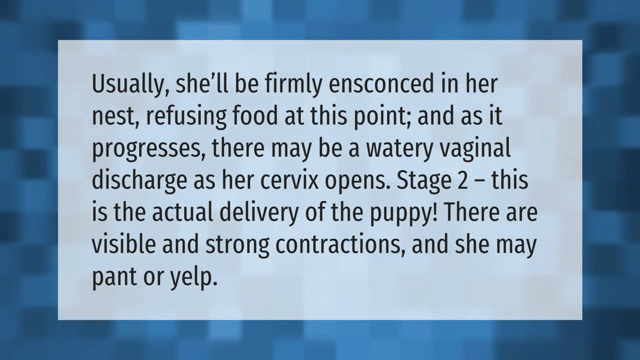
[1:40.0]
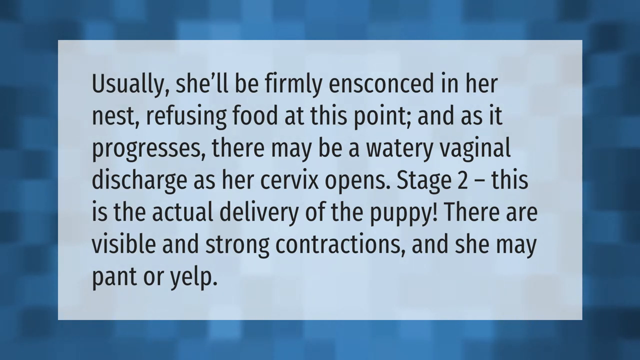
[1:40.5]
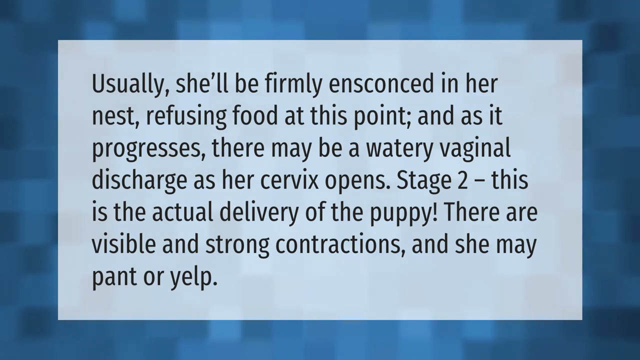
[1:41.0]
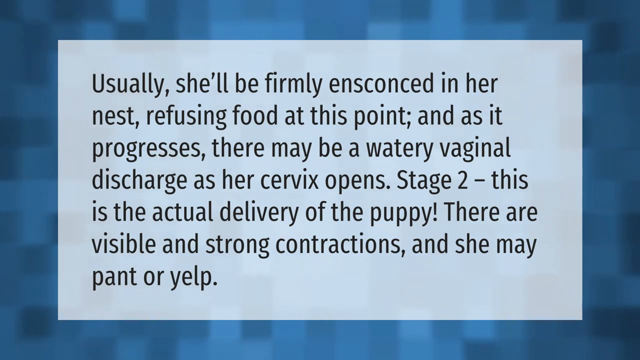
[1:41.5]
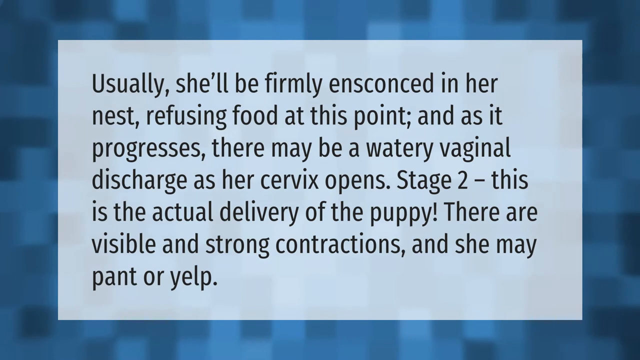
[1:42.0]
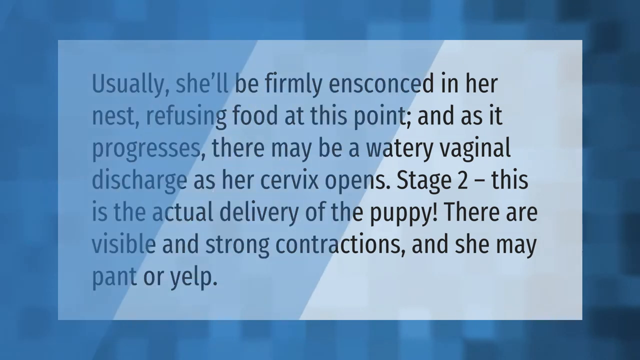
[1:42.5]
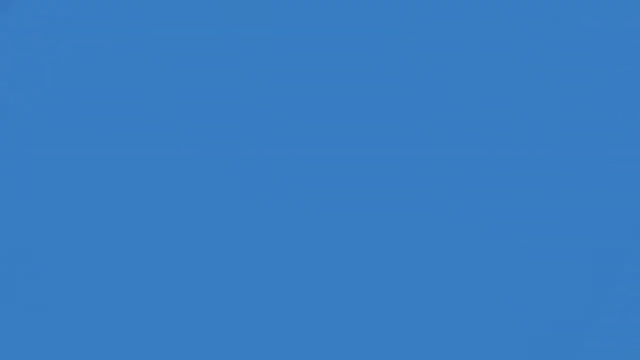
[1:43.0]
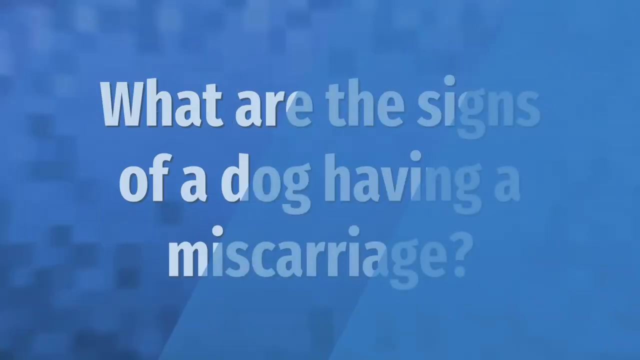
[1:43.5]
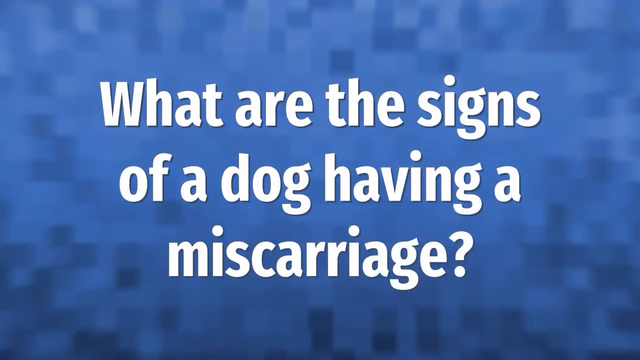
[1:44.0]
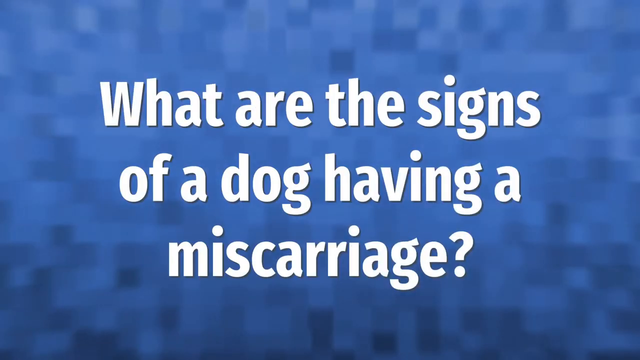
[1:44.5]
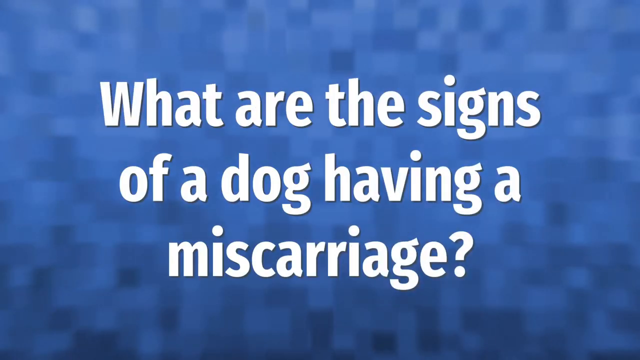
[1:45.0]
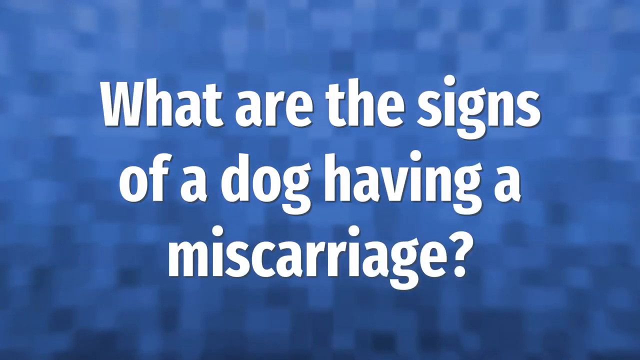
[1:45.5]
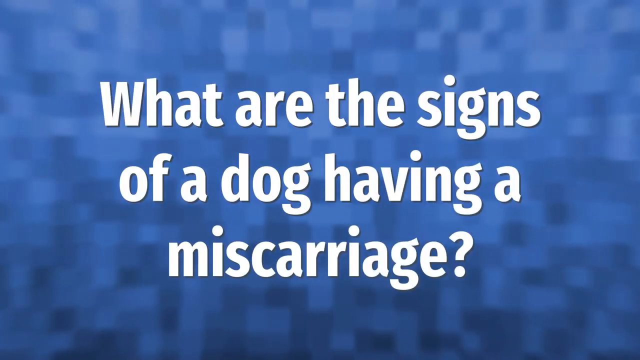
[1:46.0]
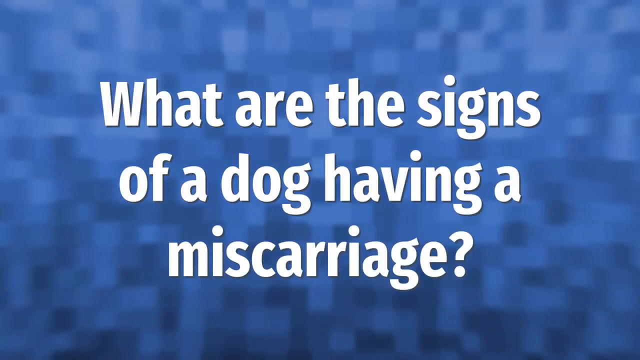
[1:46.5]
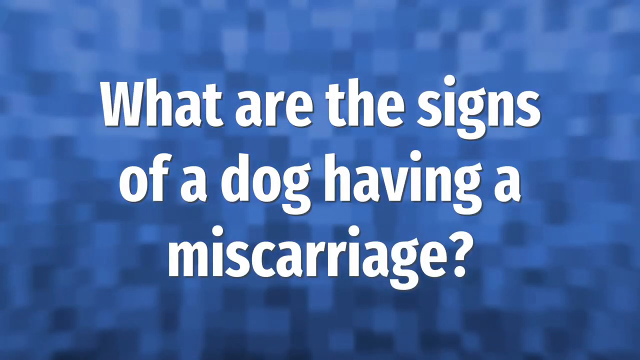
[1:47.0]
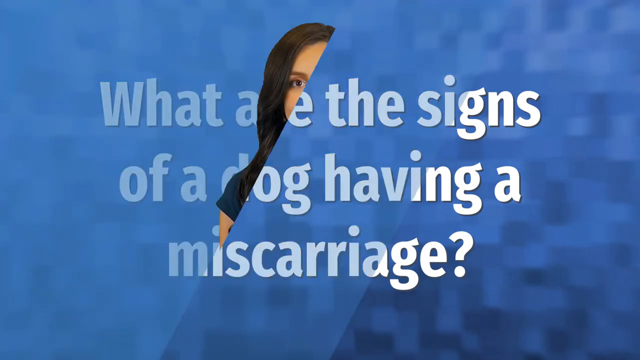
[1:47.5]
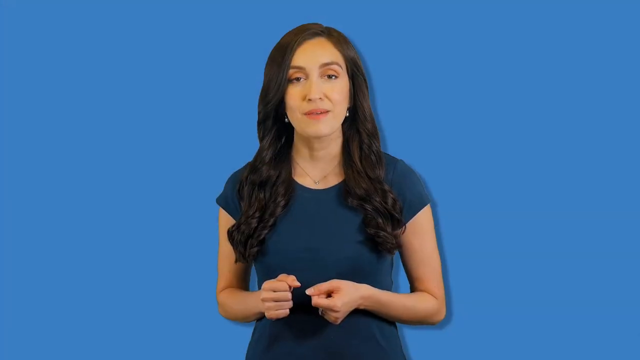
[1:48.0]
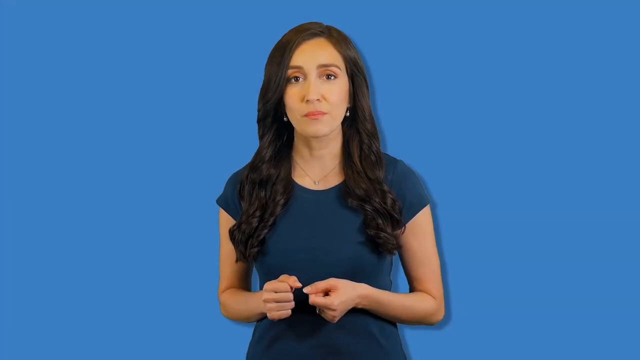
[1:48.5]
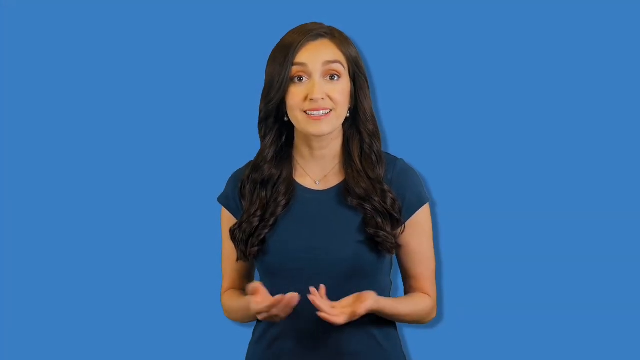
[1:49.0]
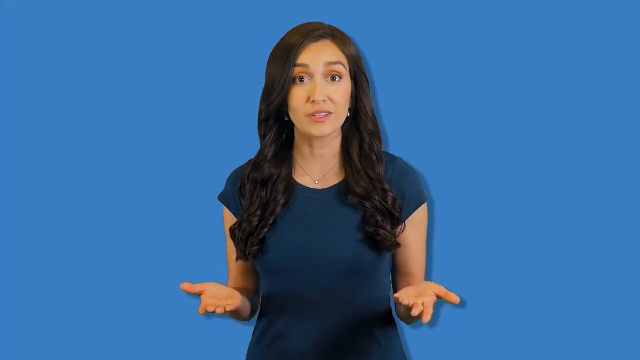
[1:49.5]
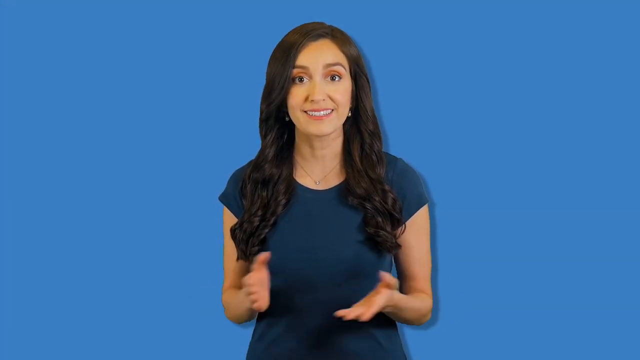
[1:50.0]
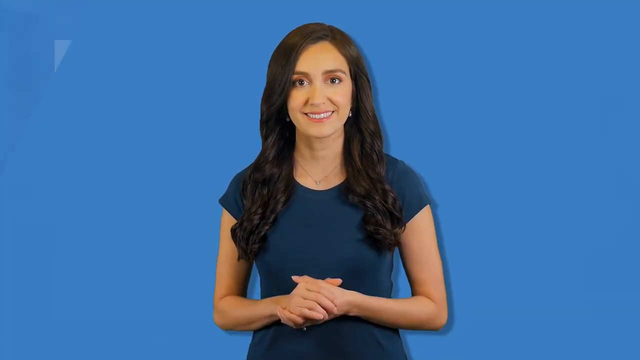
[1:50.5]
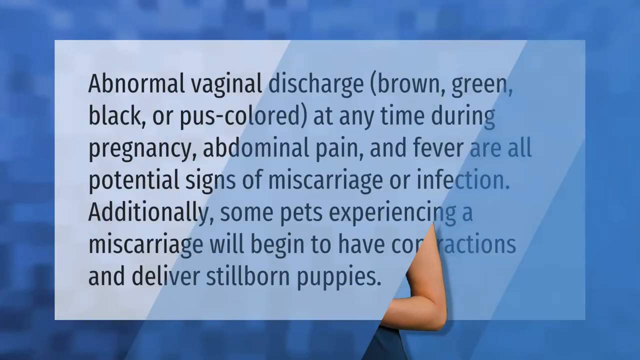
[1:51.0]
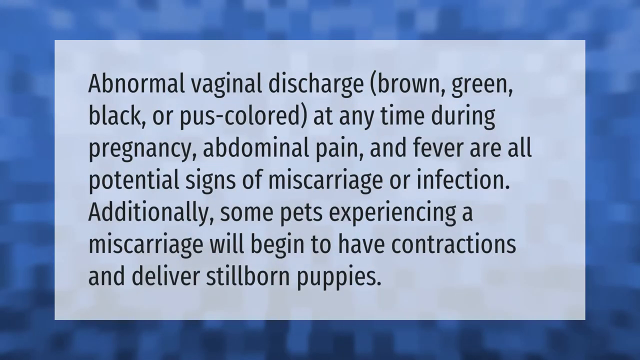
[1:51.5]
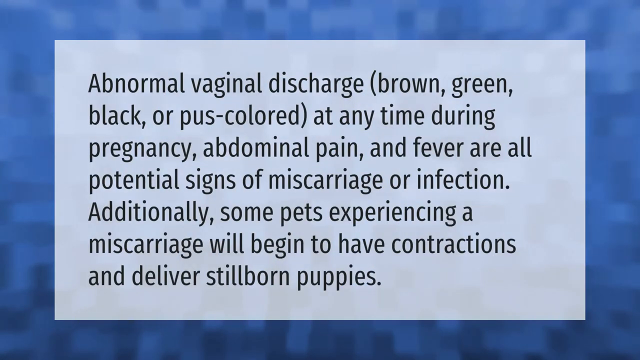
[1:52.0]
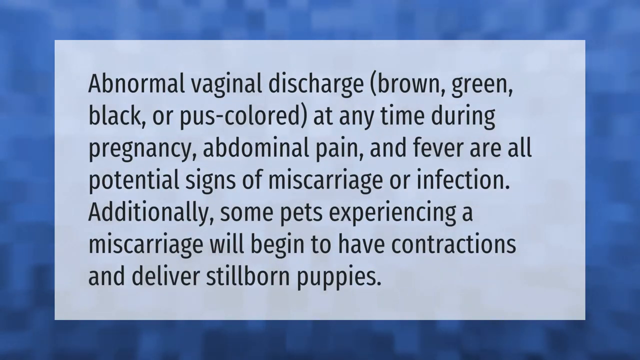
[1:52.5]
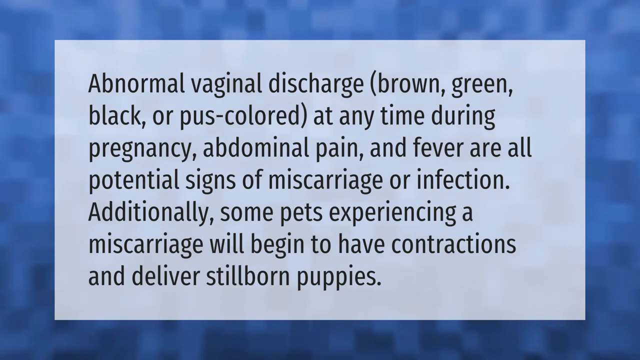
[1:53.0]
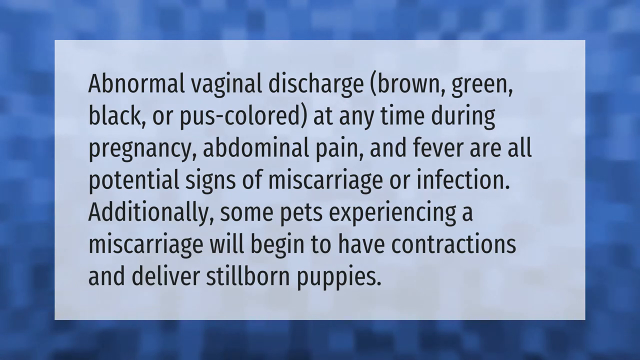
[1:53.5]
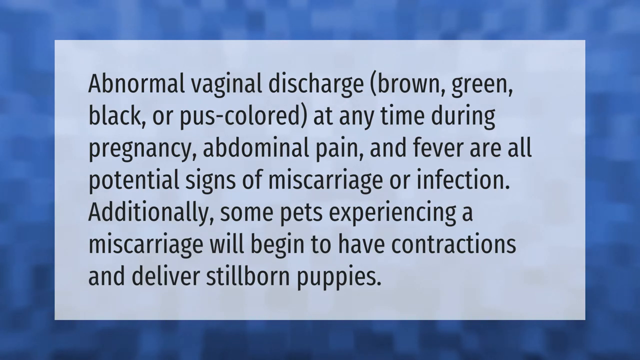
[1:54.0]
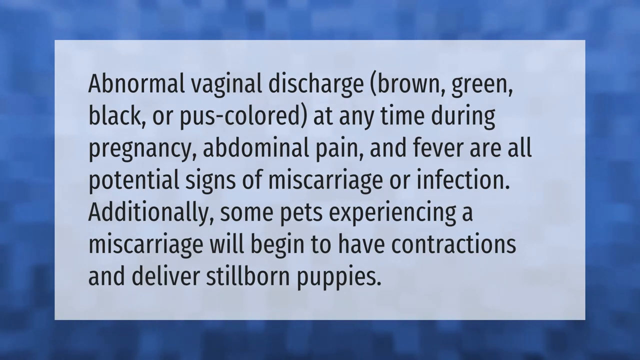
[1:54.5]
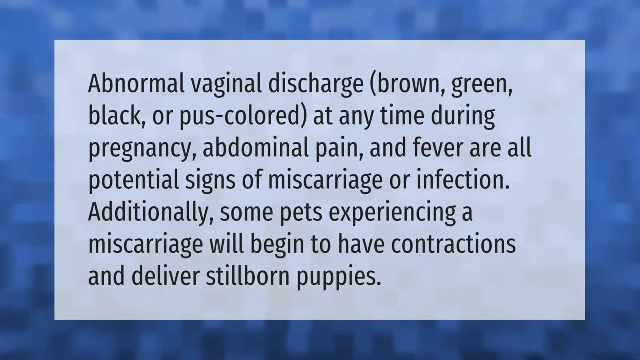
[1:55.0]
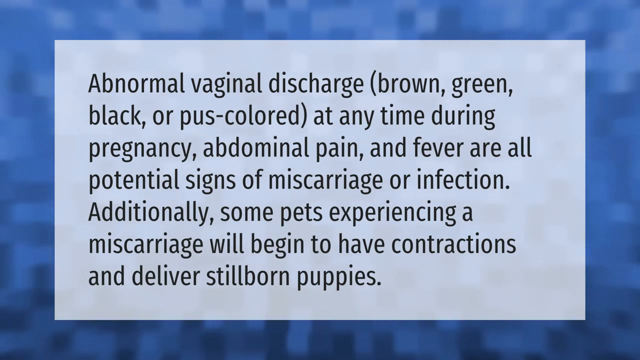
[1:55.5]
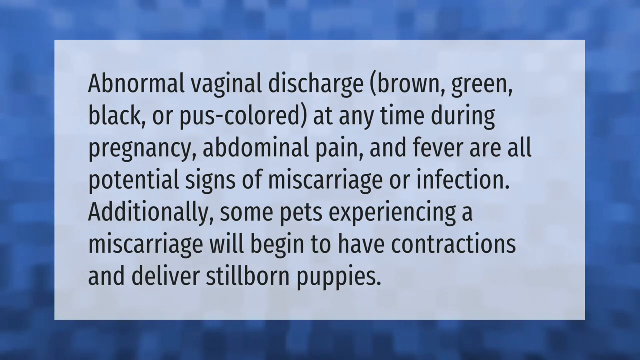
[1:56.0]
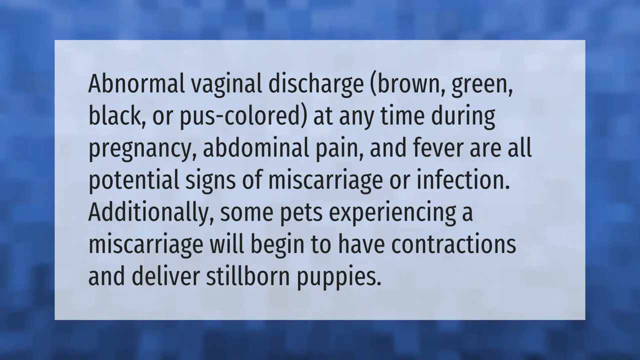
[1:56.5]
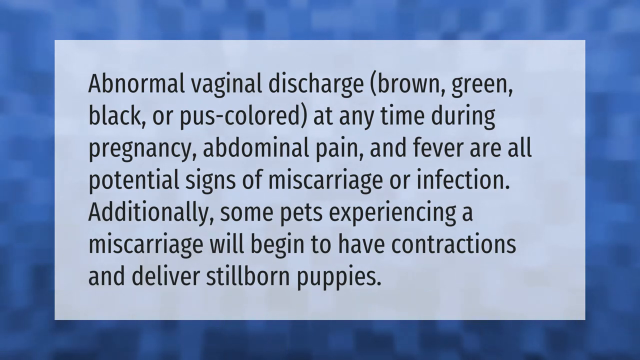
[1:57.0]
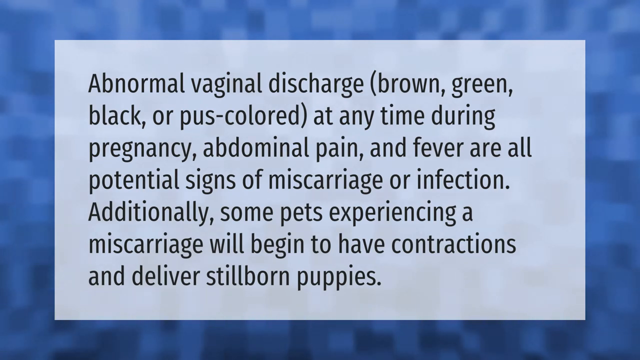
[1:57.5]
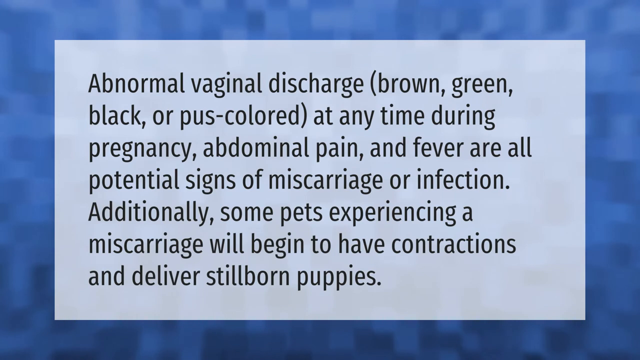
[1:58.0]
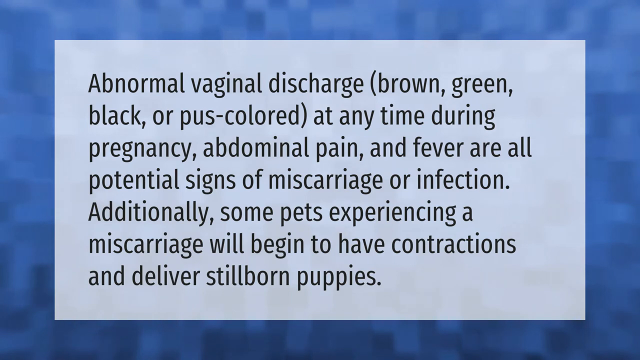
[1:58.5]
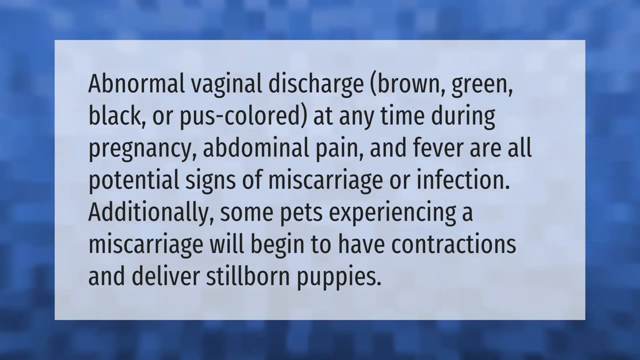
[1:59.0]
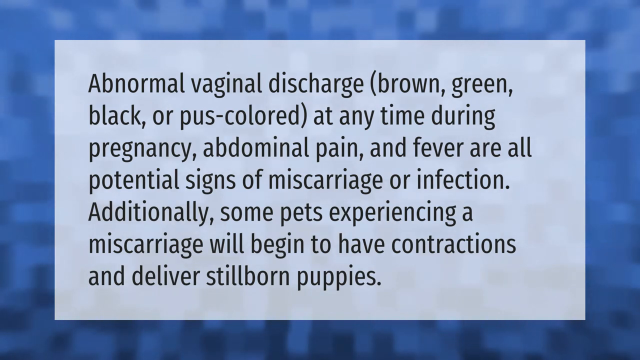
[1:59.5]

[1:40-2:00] The dark blue screen with darker-colored squares and a wide light blue rectangle in the center reads "usually she'll be firmly ensconced in her nest refusing food at this point and as it progresses there may be a watery vaginal discharge as her cervix opens stage two this is actual delivery of the puppy there are visible and strong contractions and she may pant or yelp." It changes to the solid blue screen and then back to the blue screen with darker-colored squares, which reads "what are the signs of a dog having a miscarriage." The screen then changes to the solid blue with the woman with dark hair in the dark blue shirt, who comes back on and starts talking. Next is the blue screen with darker-colored squares and a white or light blue rectangle in the center, reading "abnormal vaginal discharge, brown, green, black" and "at any time during pregnancy. Abnormal pain and fever are all potential signs of miscarriage or infection. Additionally, some pets experiencing miscarriage will begin to have contractions and deliver stillborn puppies."